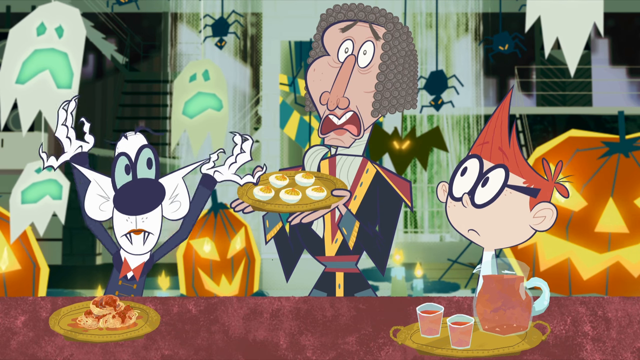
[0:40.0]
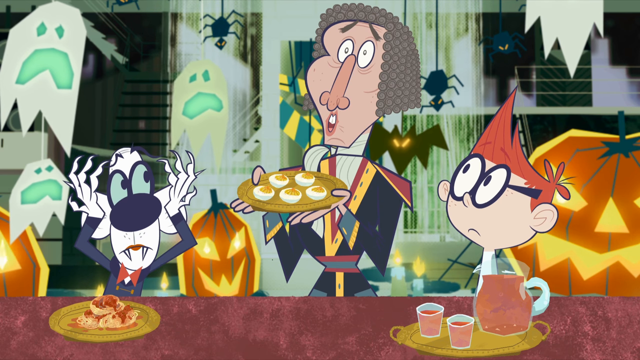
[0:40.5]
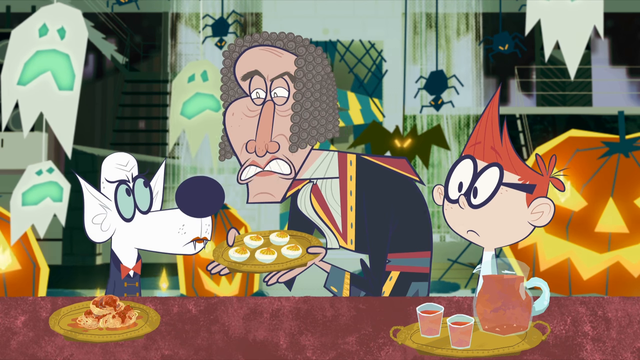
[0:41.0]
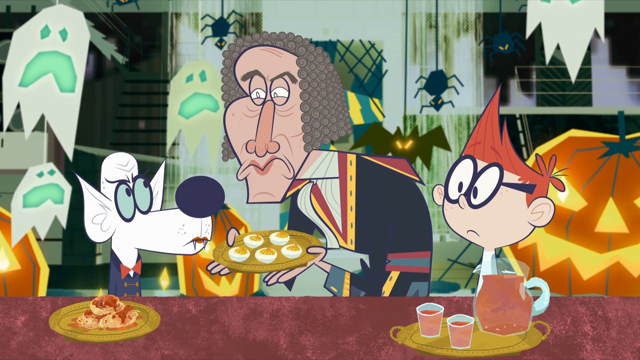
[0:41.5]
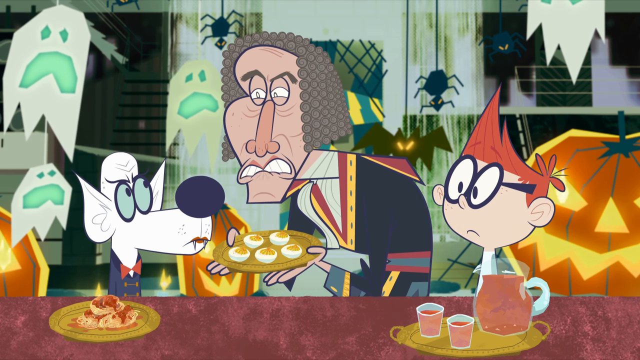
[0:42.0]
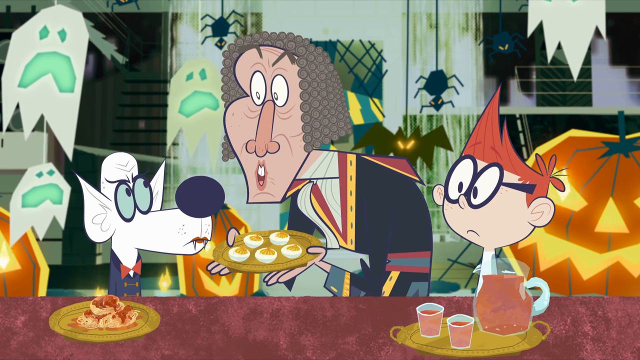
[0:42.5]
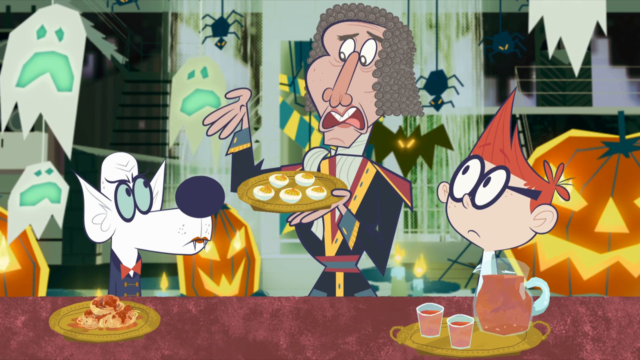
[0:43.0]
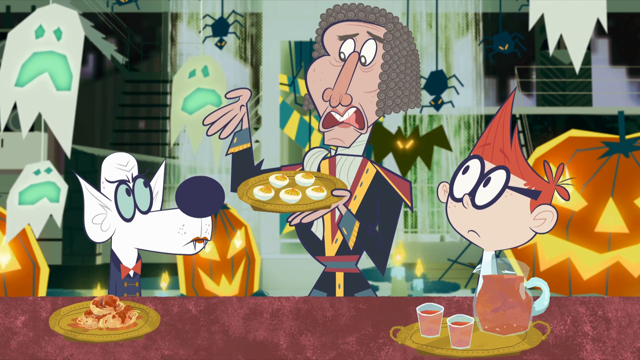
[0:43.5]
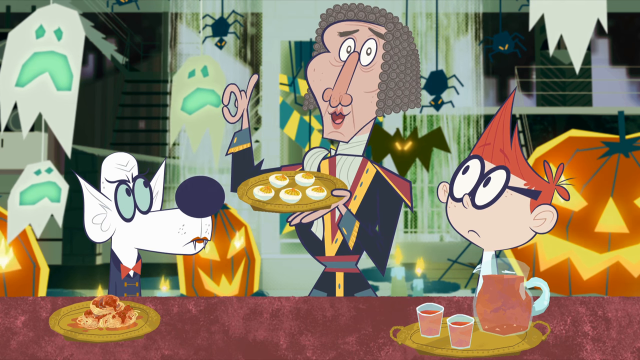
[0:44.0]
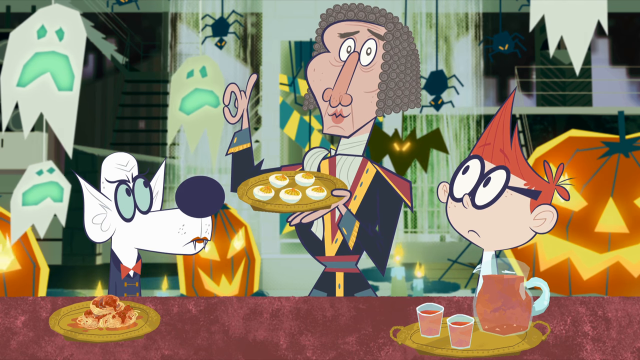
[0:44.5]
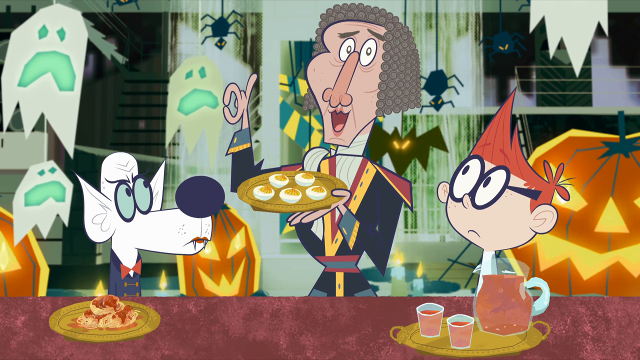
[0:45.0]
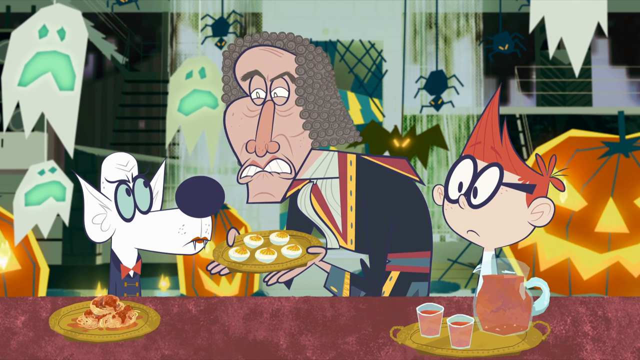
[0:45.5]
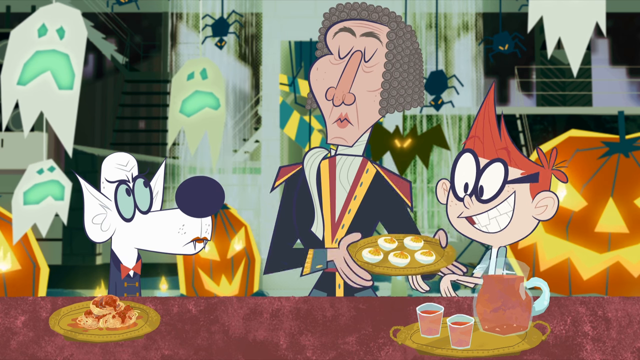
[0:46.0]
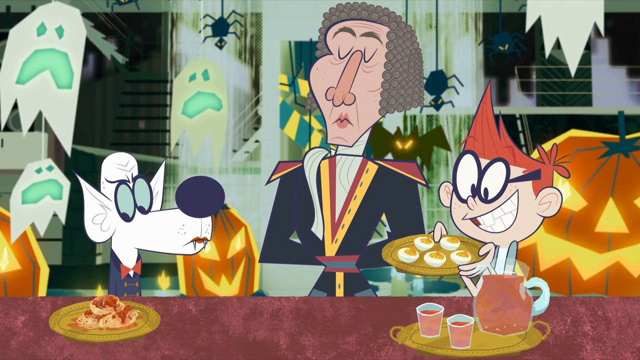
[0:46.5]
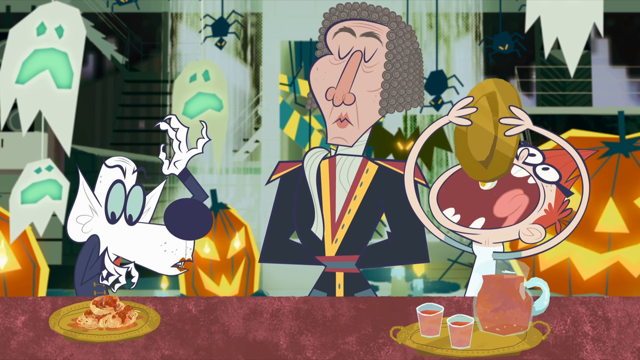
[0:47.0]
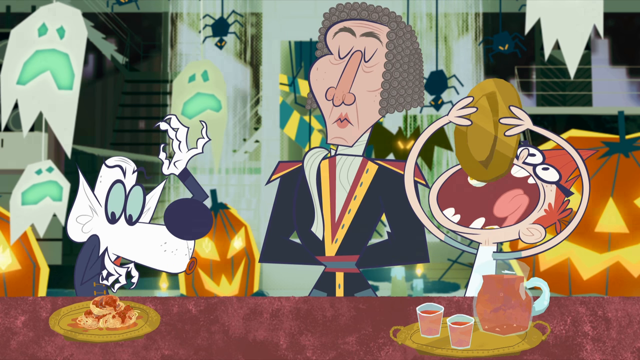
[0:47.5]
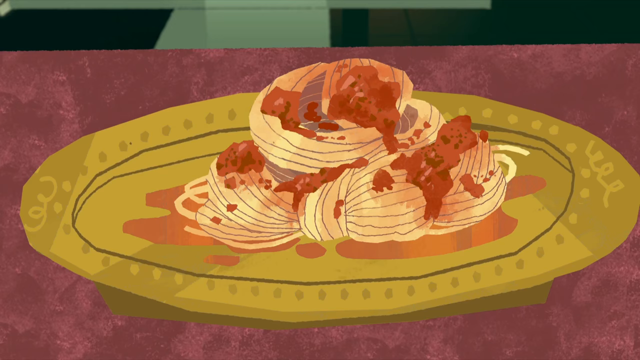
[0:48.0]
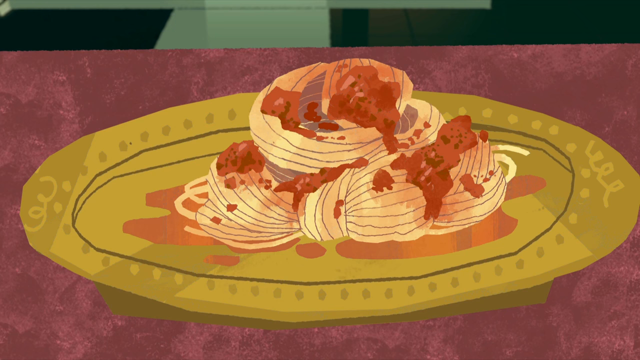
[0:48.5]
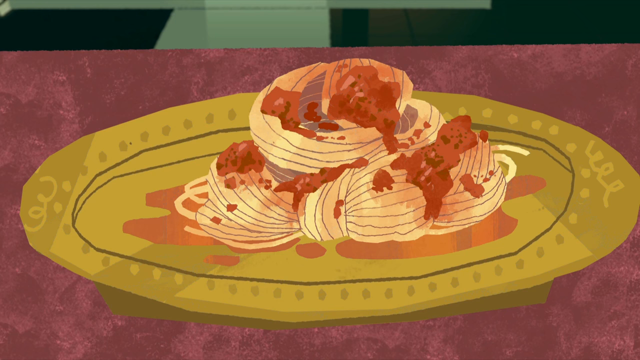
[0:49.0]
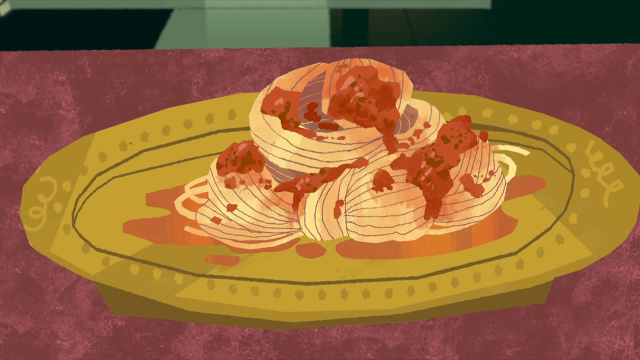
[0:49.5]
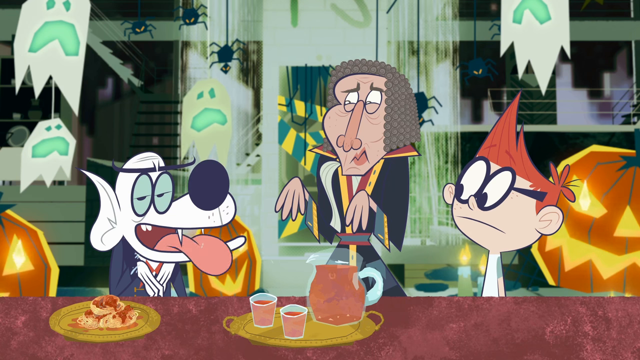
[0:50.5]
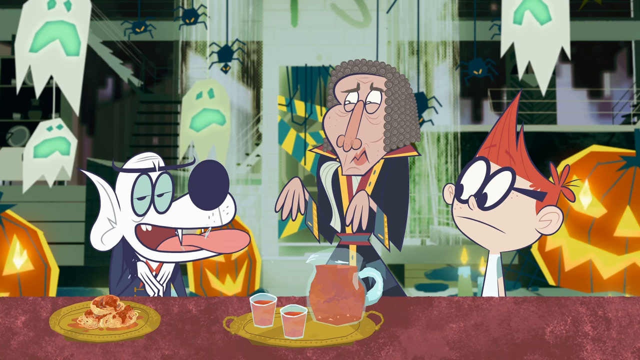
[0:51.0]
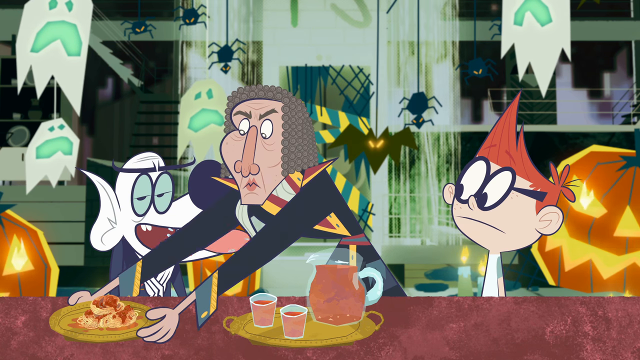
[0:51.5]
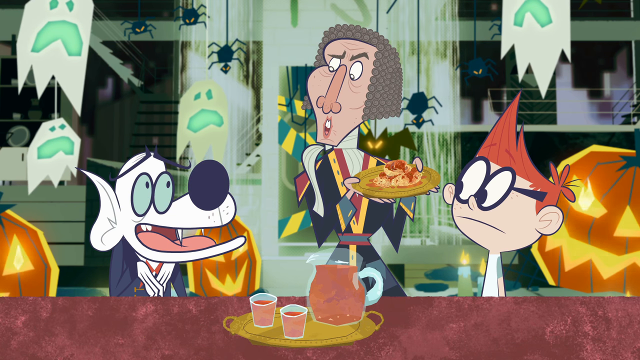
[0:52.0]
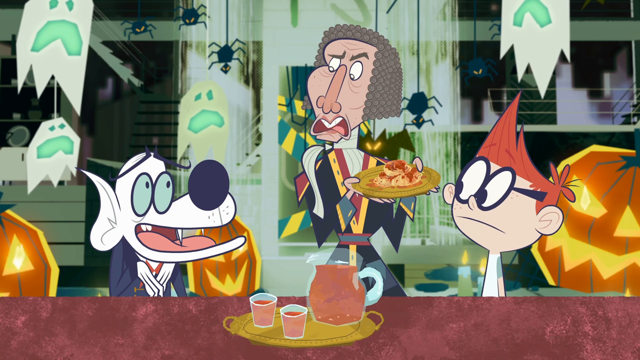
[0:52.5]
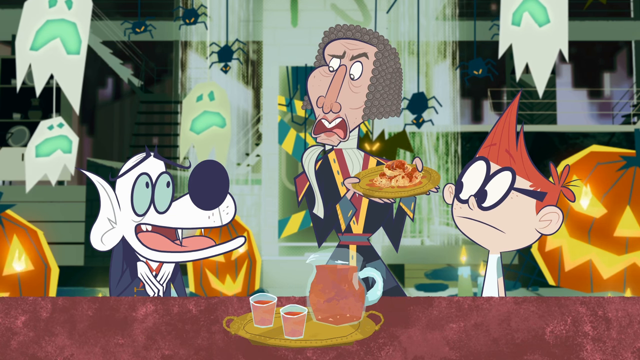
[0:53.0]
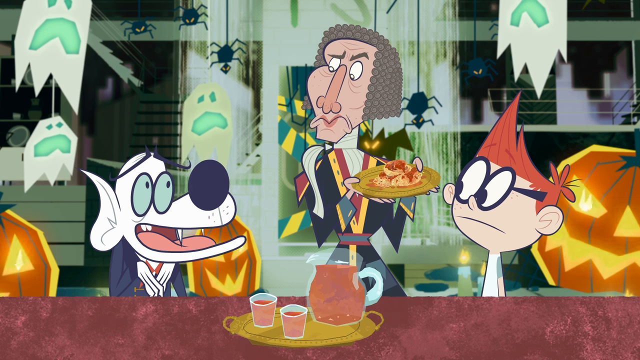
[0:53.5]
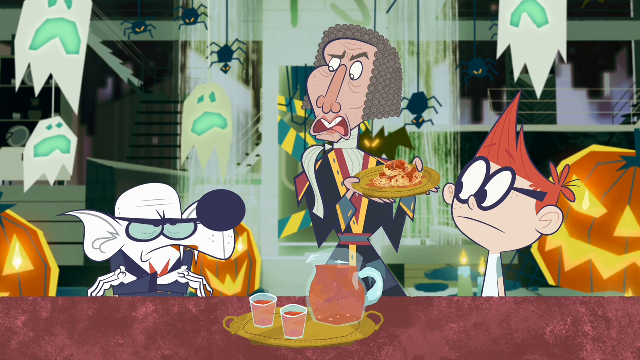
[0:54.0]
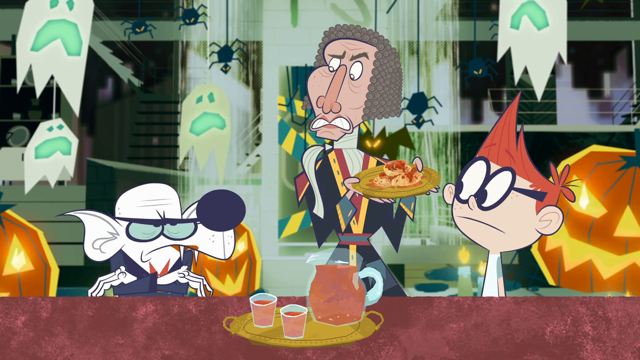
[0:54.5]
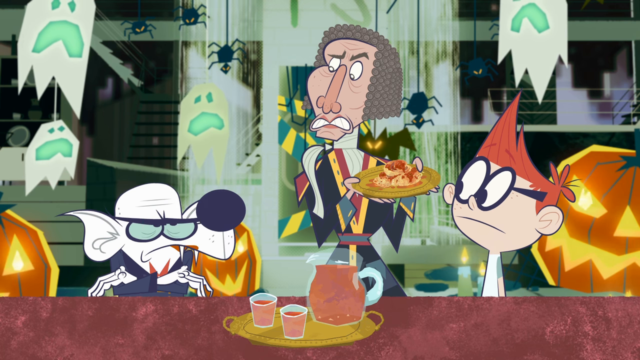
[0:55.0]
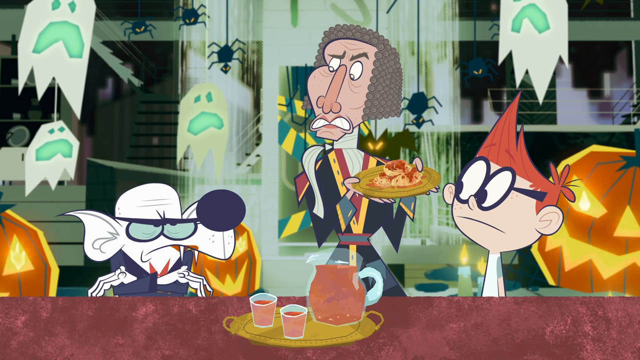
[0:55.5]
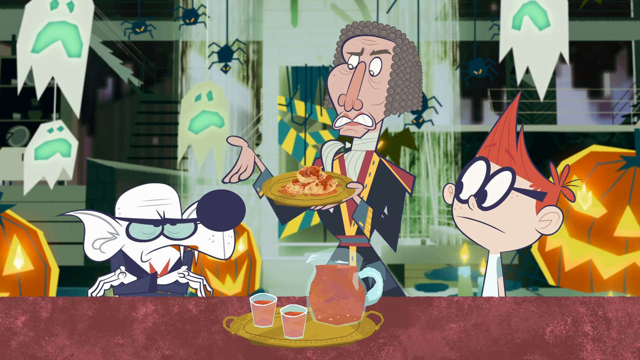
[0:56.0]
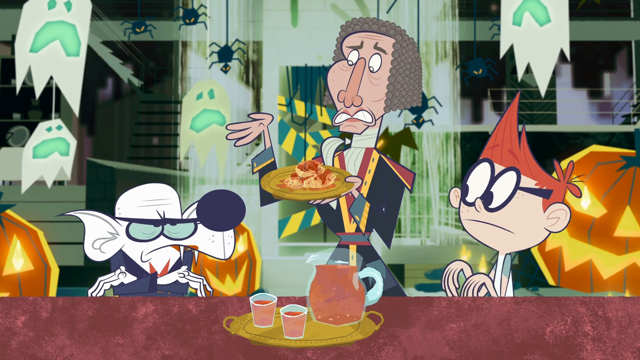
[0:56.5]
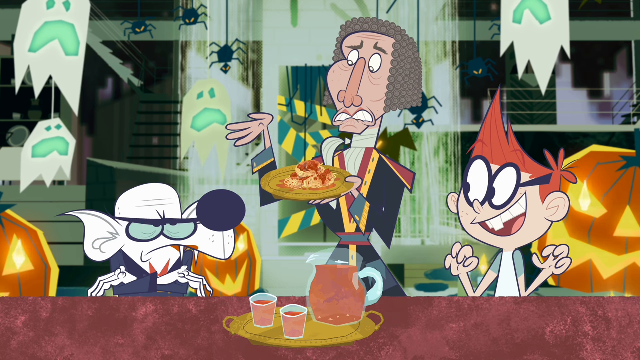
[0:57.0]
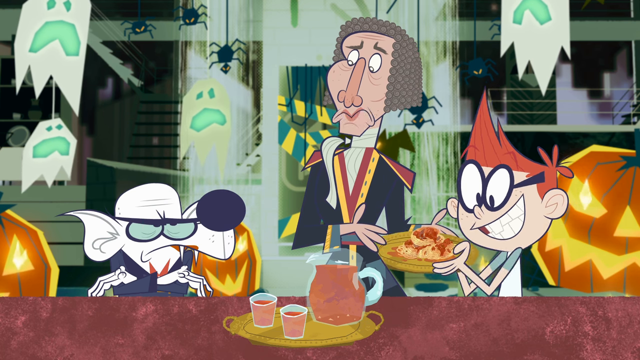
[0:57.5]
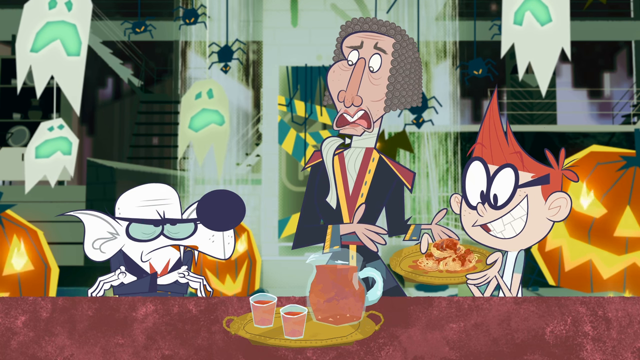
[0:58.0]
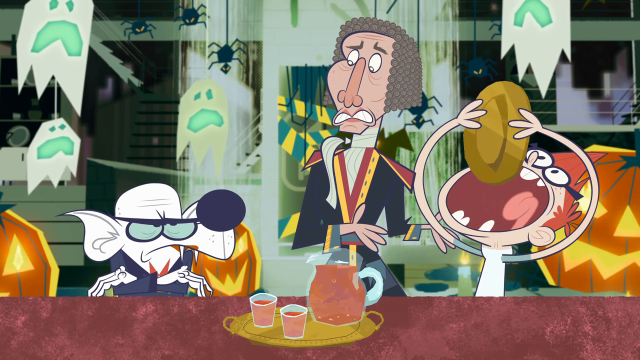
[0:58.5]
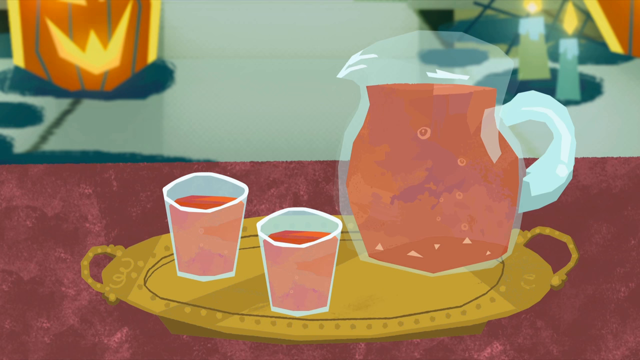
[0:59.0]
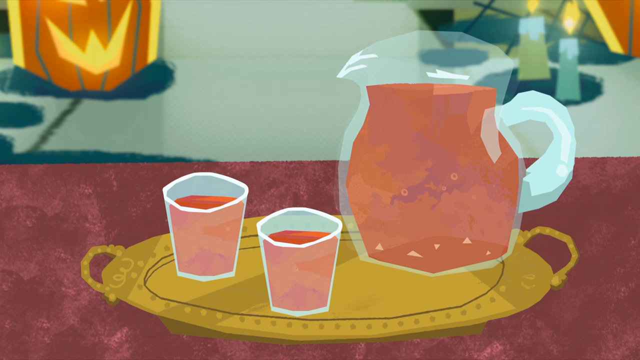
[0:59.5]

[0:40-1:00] The dog expresses and emotes with his paws. He seems to be a vampire dog or a bat, with oddly shaped, stylized, wrinkly claws that are almost bat-like. In the center of the screen, the suspected vampire holds a plate of food that appears to be the garlic and gives it to the kid on the right, who gladly eats it, smiling and happy. The camera cuts to the dog on the left, who is hungry, with his tongue out, excited for the food on the left, which appears to be some sort of spaghetti. The vampire cautiously handles it and then hands it to the kid, who gladly eats it. Midway through, the vampire makes an okay symbol with his fingers, and he keeps a very posh, fancy, formal stance.